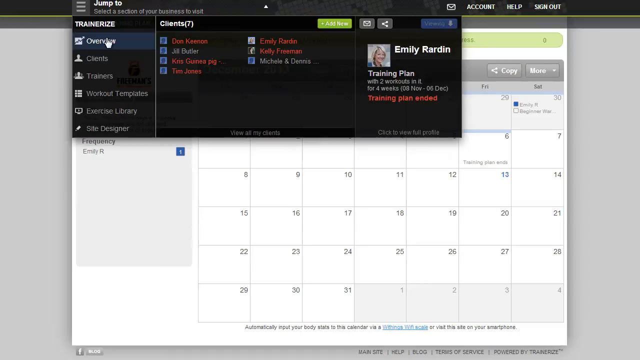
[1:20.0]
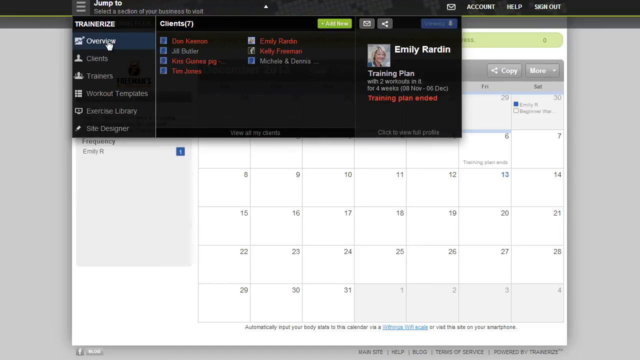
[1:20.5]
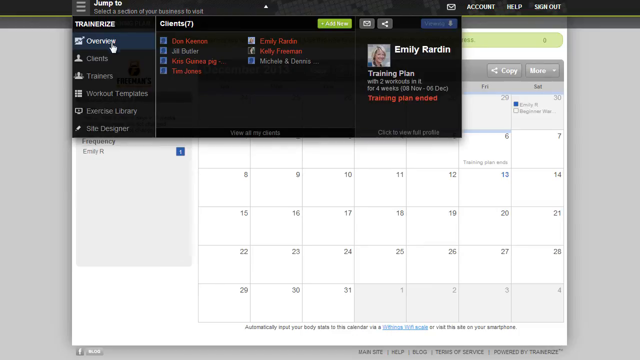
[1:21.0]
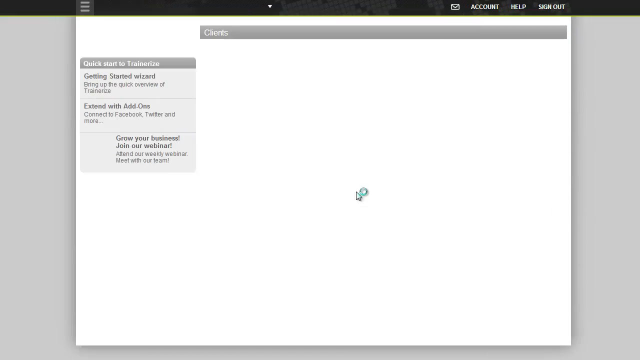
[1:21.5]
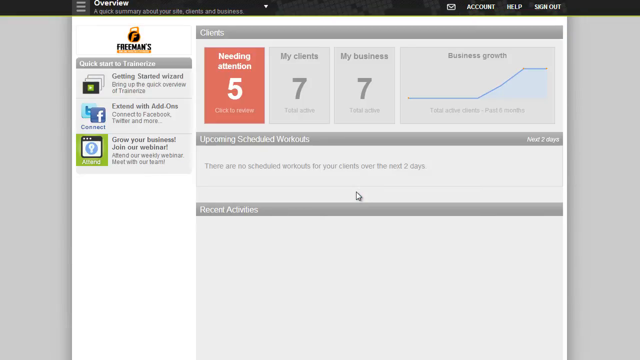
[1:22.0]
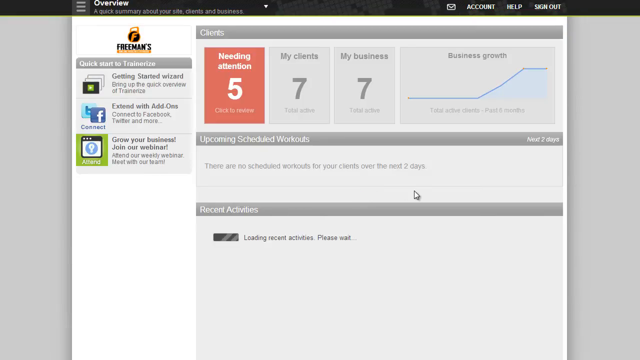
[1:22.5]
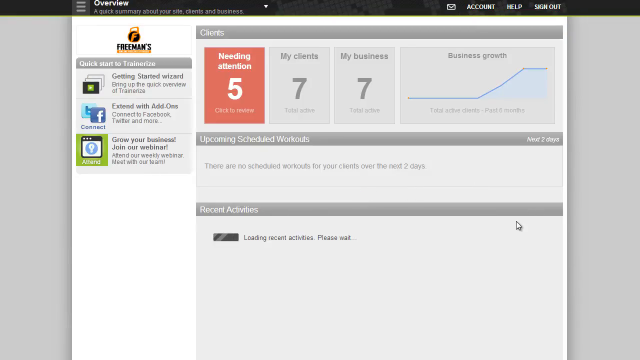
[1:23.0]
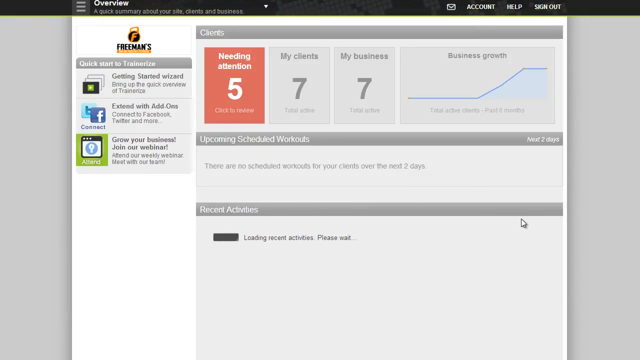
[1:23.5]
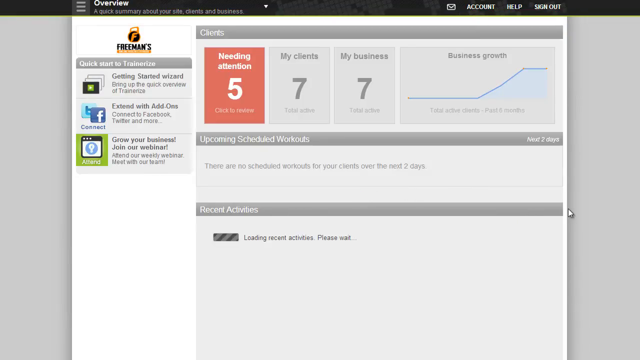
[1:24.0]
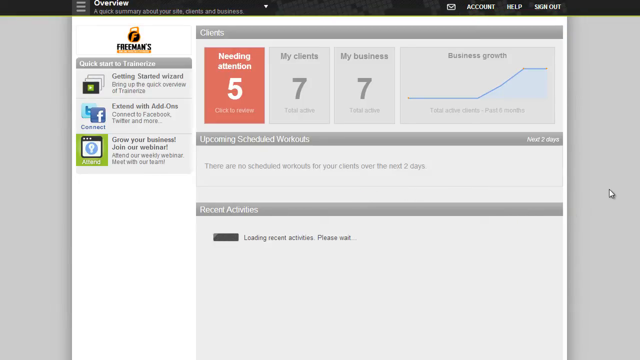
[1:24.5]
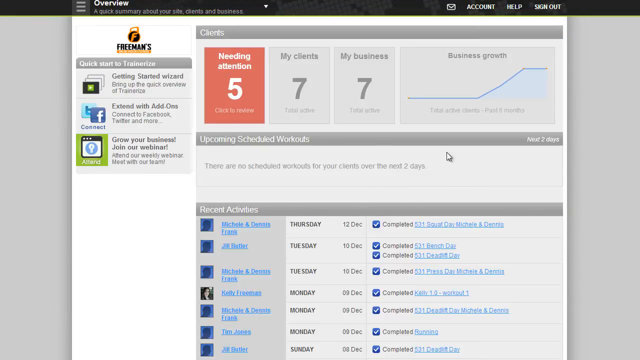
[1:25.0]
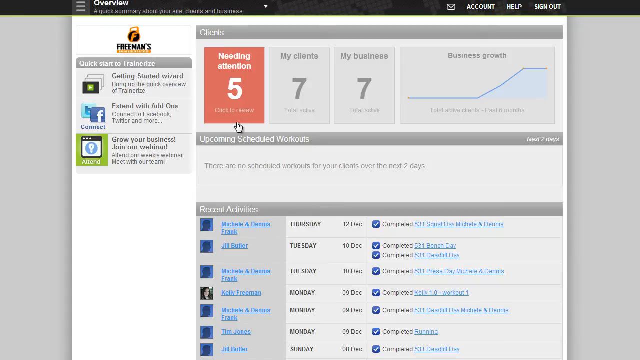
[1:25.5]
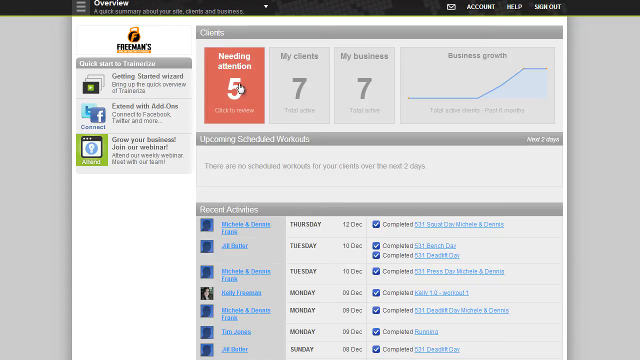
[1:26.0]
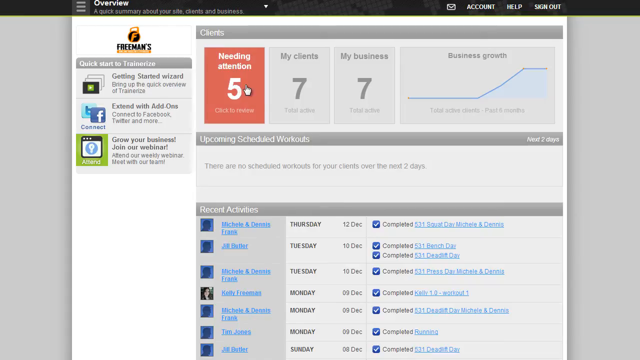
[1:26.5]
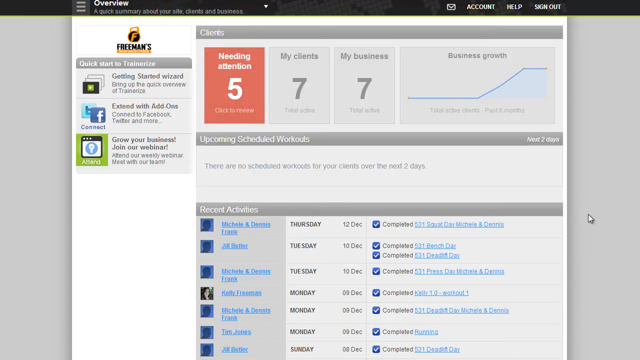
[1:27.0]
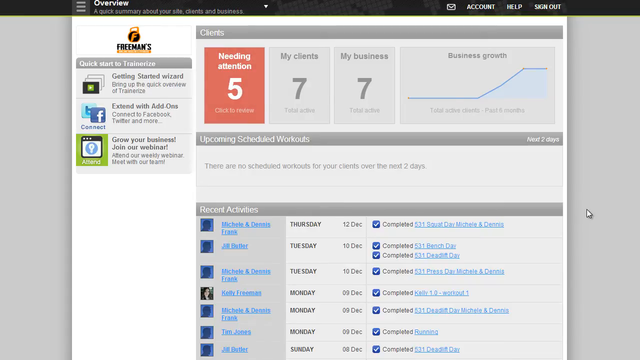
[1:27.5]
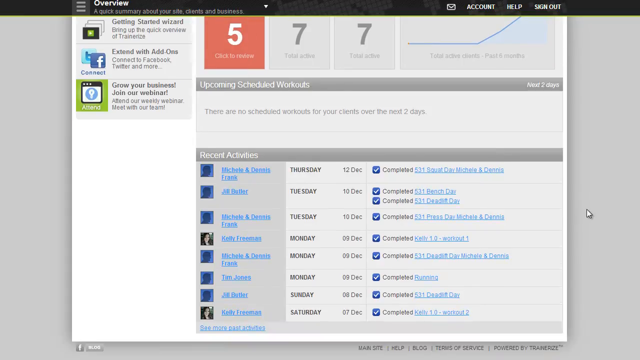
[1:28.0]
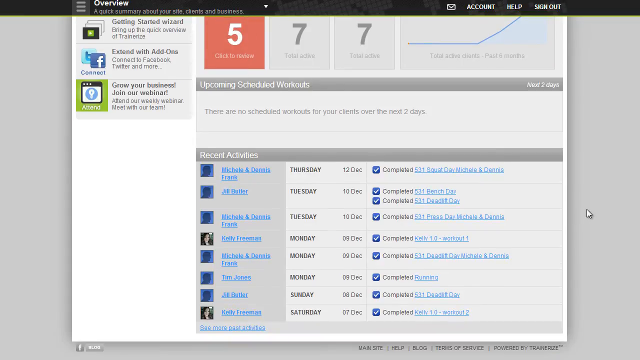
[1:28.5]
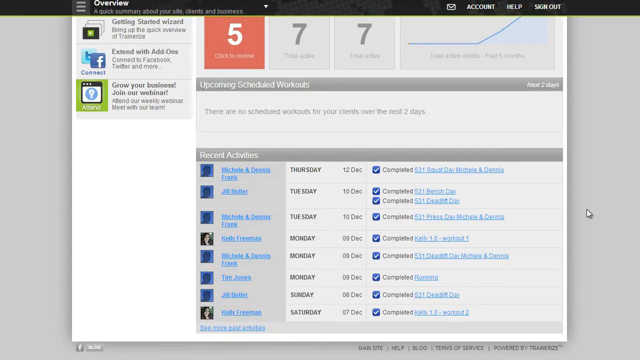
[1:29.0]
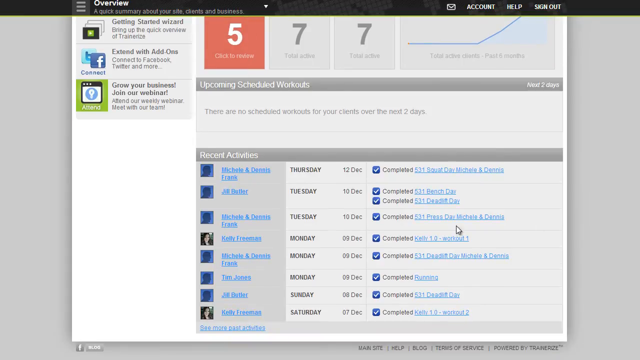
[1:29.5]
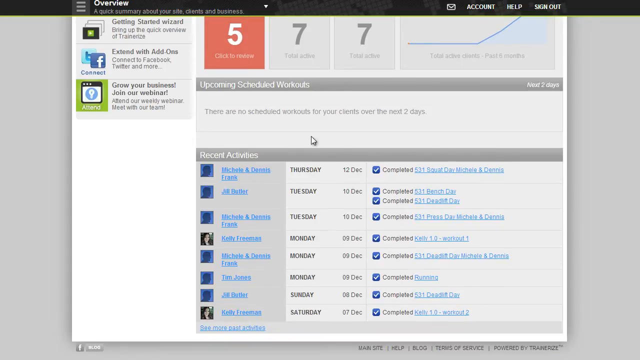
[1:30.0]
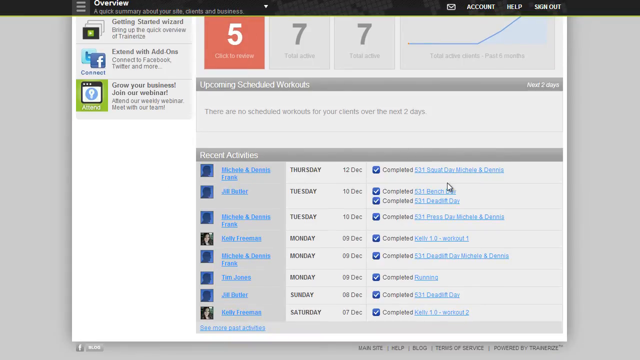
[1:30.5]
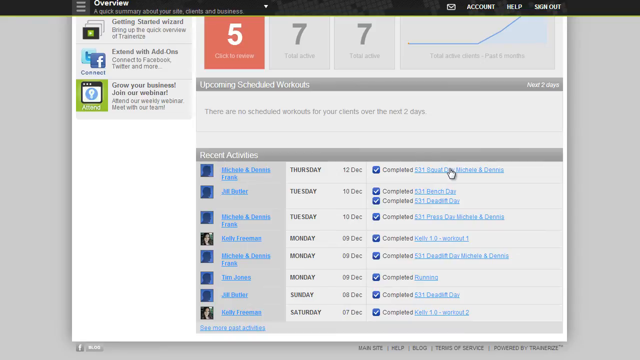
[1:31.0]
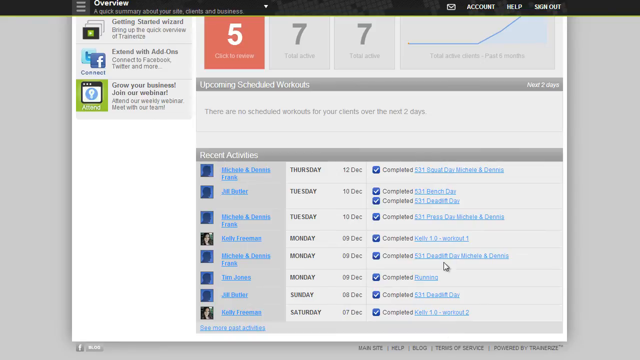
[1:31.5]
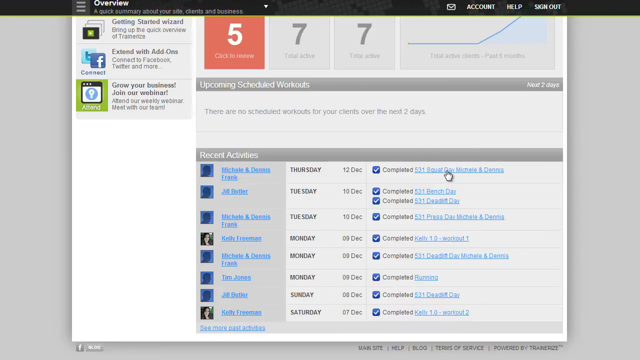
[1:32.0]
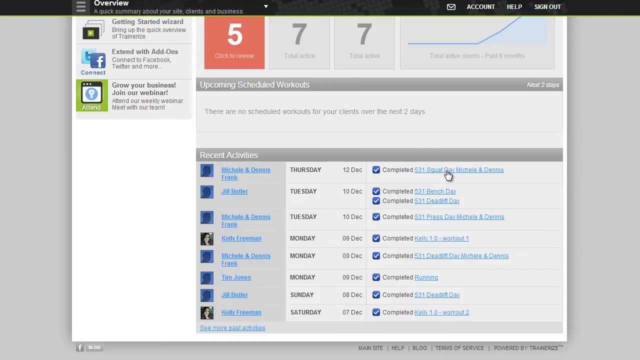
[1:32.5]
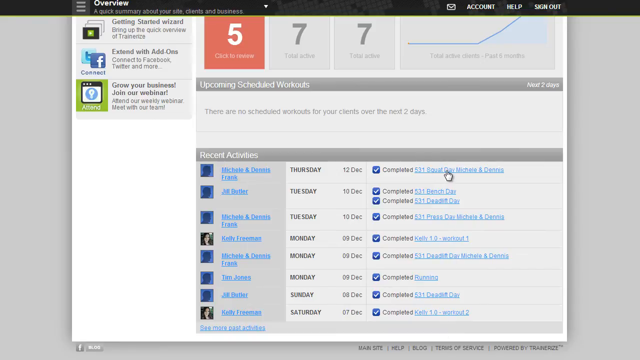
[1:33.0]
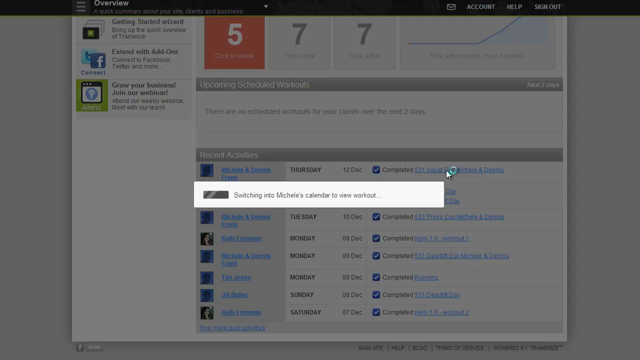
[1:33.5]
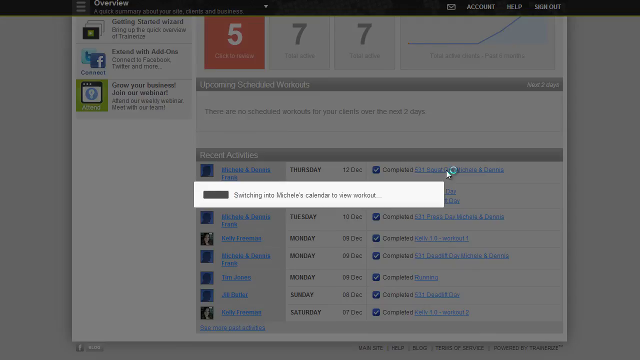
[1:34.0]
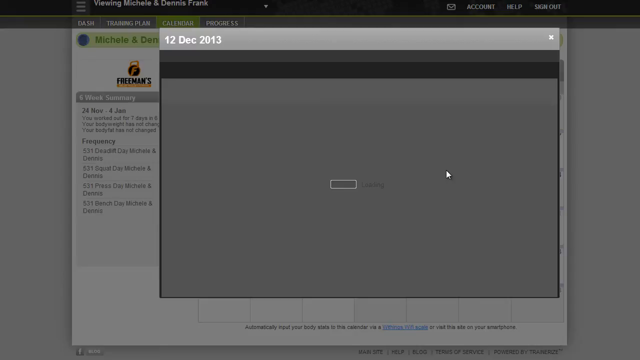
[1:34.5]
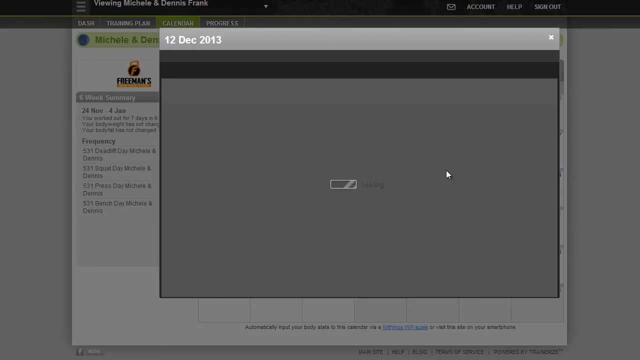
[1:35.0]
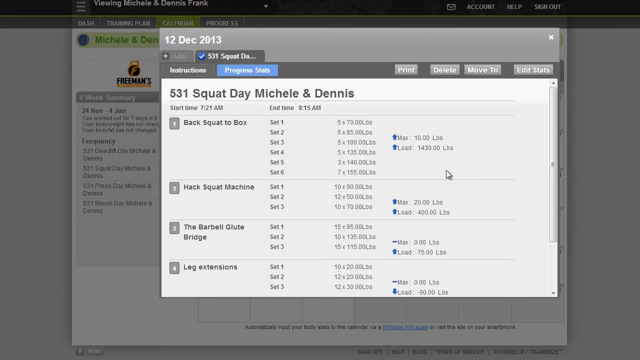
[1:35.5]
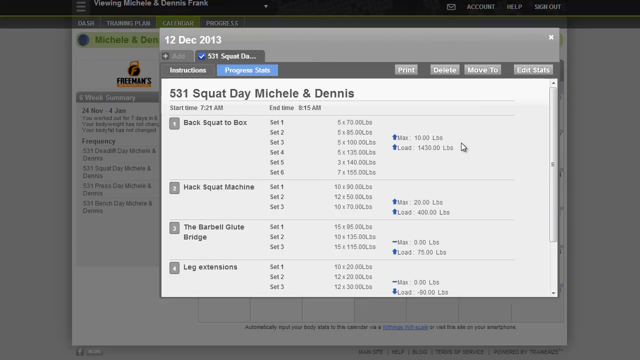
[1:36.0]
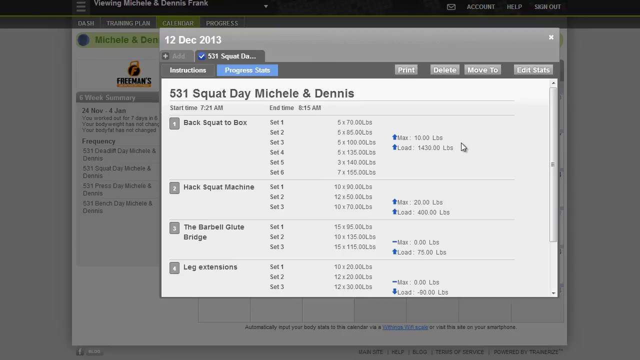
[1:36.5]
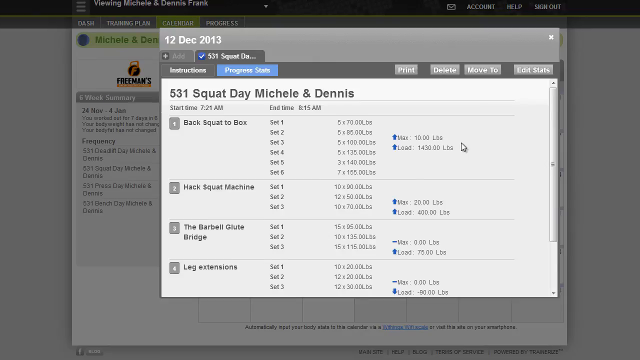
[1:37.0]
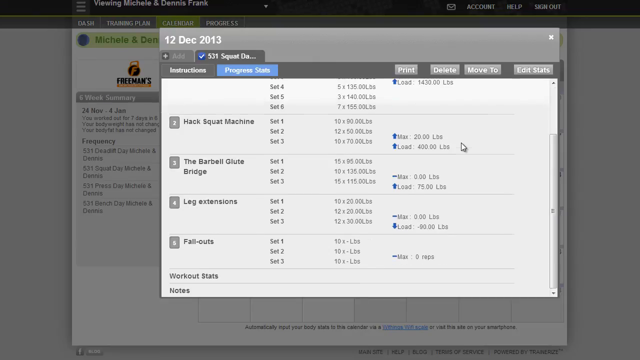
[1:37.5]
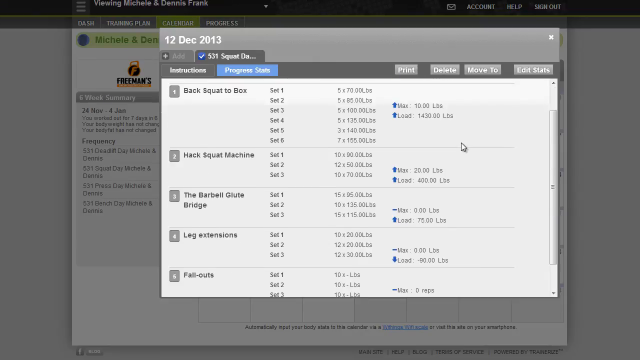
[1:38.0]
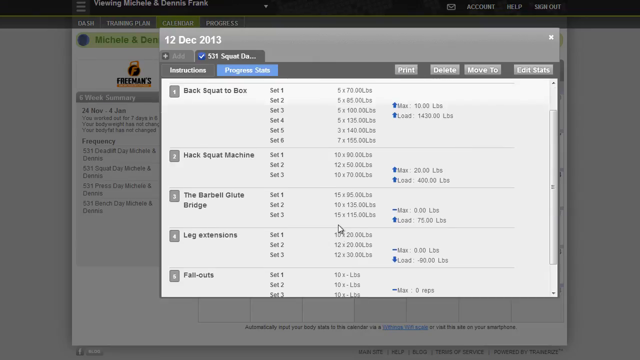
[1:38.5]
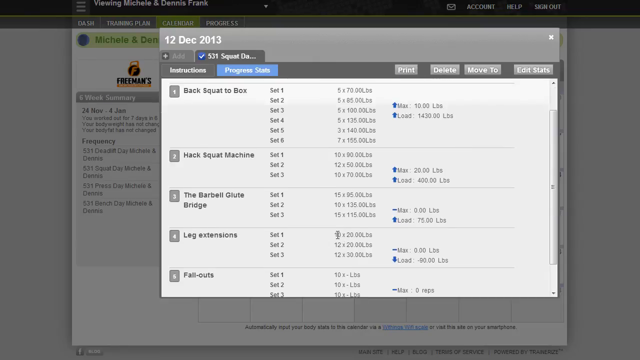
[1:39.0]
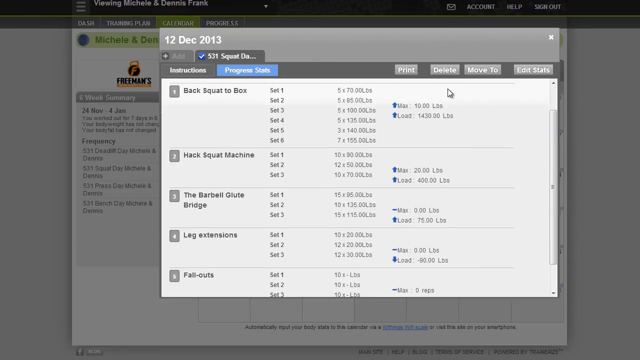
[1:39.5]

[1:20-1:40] A computer screen shows the word "overview" in white in the very top left-hand corner, on a black stripe running across the top of the page. Below, the page turns light gray and is headed "clients." Under that heading are four boxes side by side. The first is red and reads "needing attention five." The next is a gray square reading "my clients" at the top, with a dark gray 7 in the middle. The third square reads "my business" at the top, with a dark gray 7 in the middle. The fourth, bigger box reads "business growth" at the top, with a blue line running across its middle that slowly goes up. Below is another section reading "upcoming scheduled workouts," and under it, "there are no scheduled workouts for your clients over the next two days."